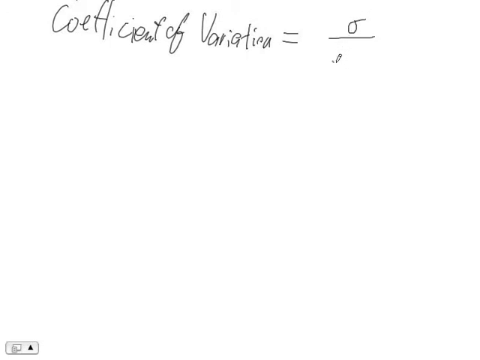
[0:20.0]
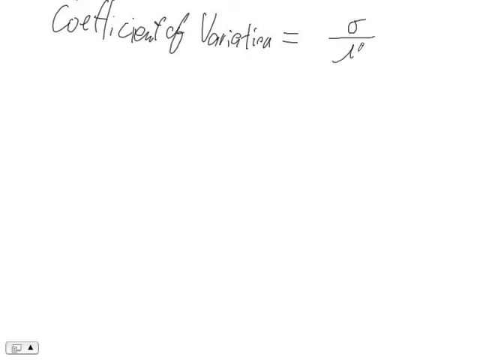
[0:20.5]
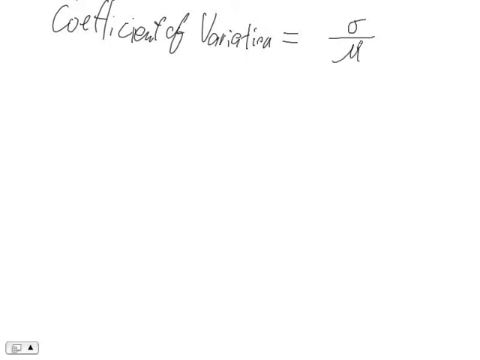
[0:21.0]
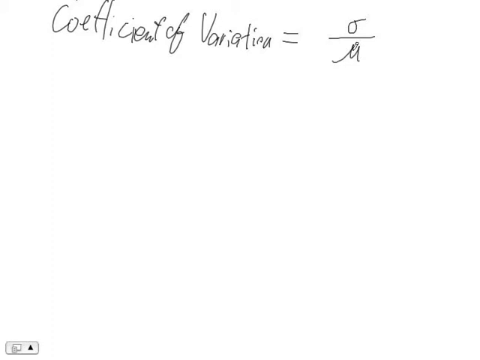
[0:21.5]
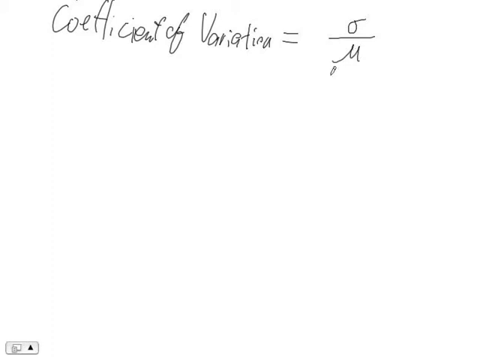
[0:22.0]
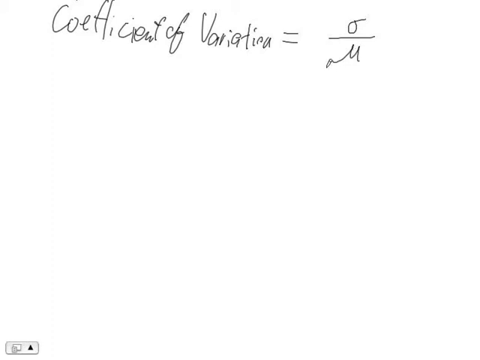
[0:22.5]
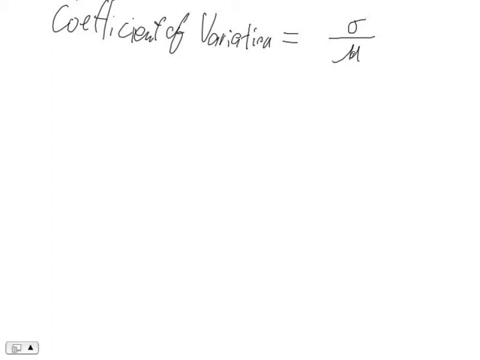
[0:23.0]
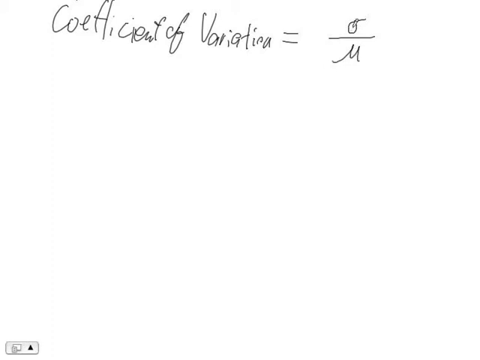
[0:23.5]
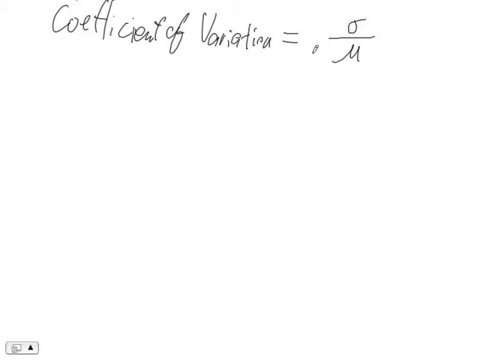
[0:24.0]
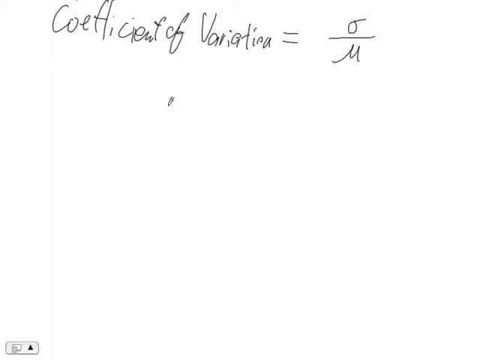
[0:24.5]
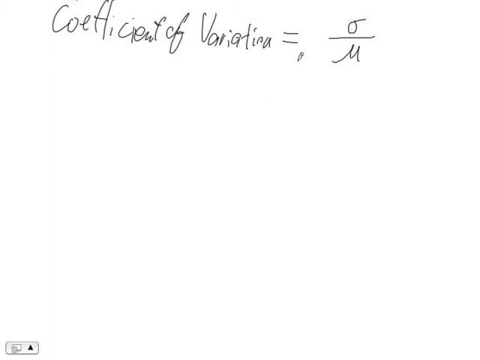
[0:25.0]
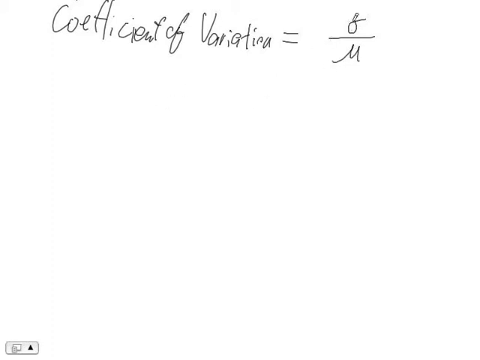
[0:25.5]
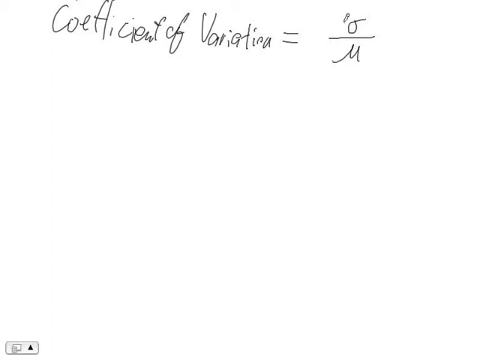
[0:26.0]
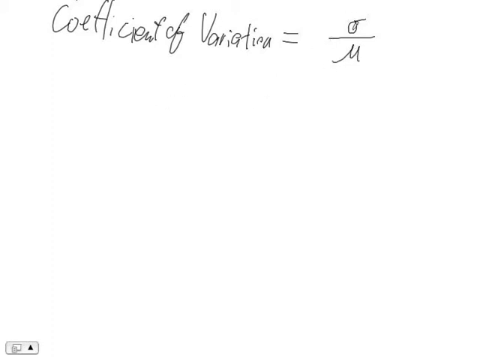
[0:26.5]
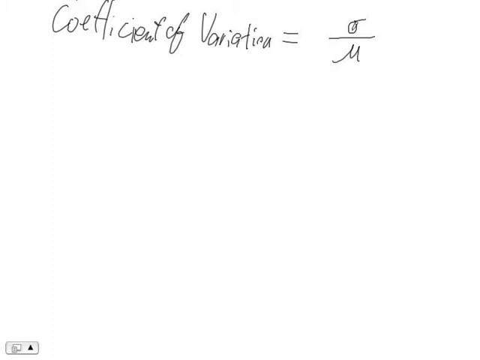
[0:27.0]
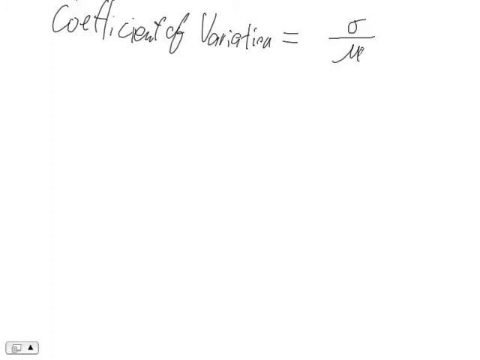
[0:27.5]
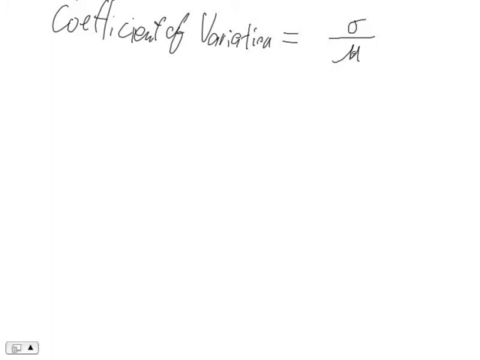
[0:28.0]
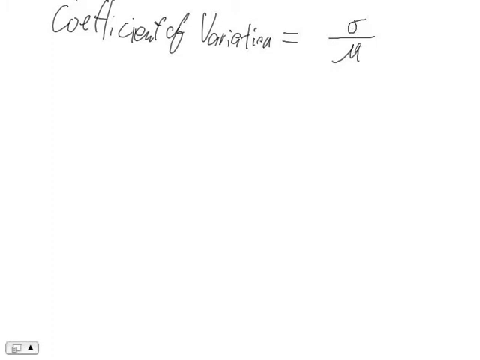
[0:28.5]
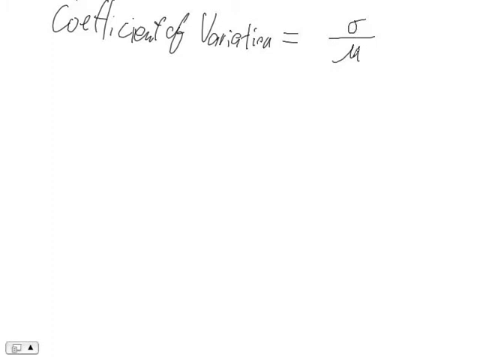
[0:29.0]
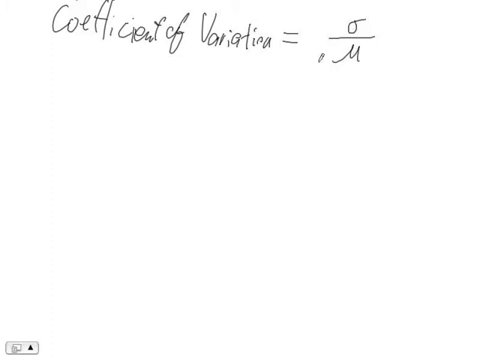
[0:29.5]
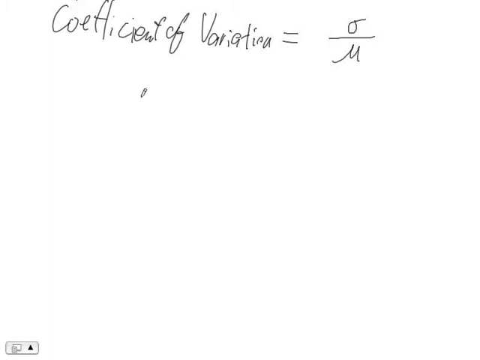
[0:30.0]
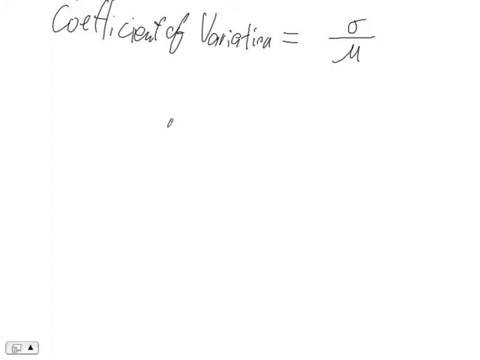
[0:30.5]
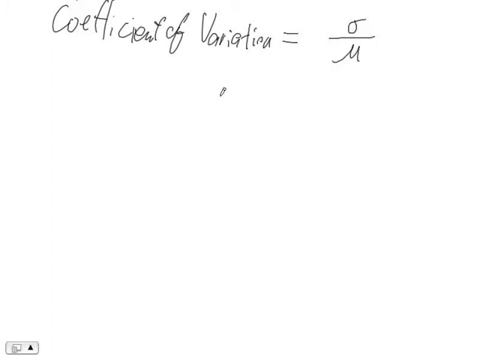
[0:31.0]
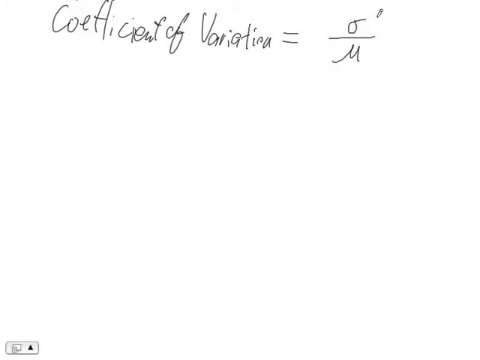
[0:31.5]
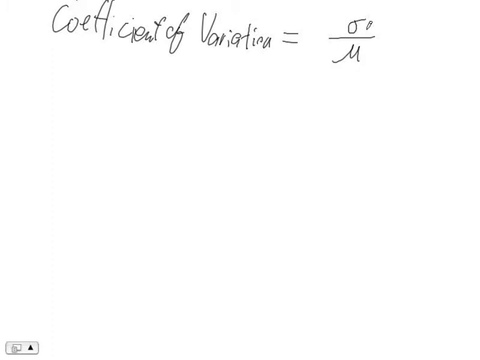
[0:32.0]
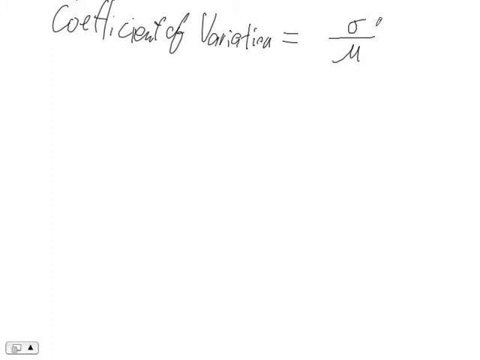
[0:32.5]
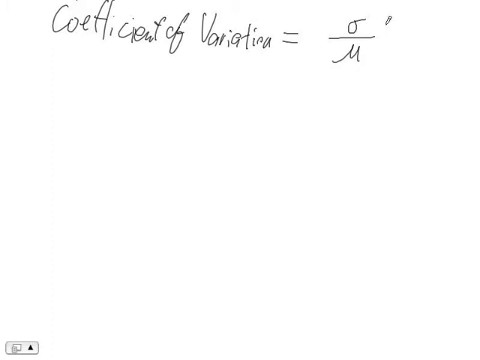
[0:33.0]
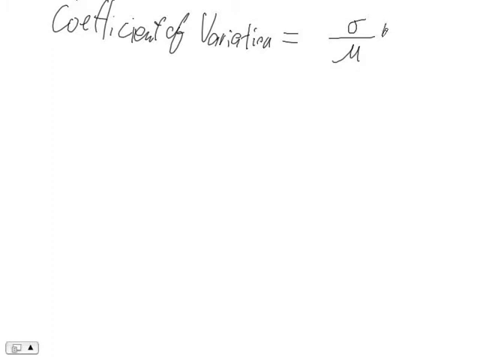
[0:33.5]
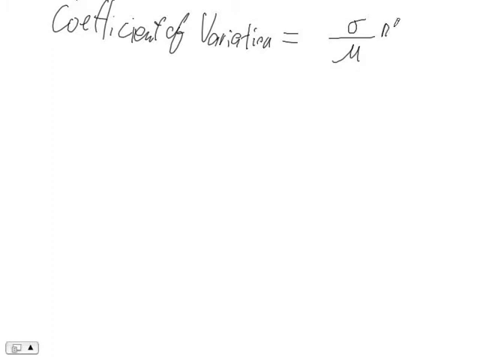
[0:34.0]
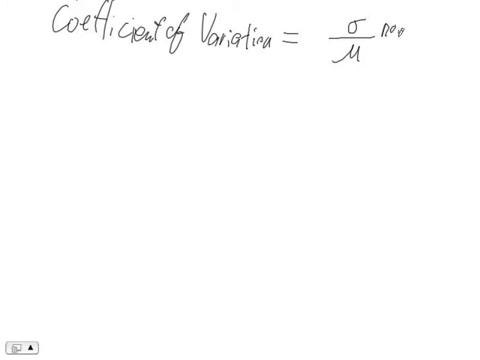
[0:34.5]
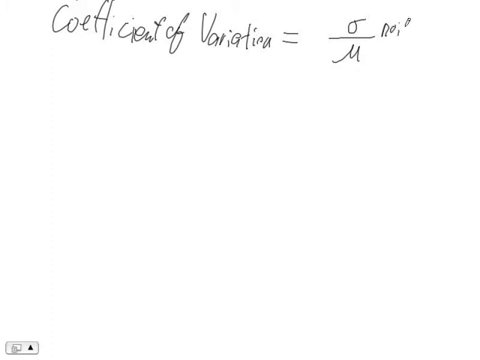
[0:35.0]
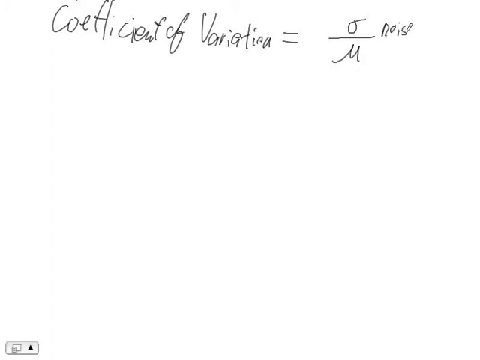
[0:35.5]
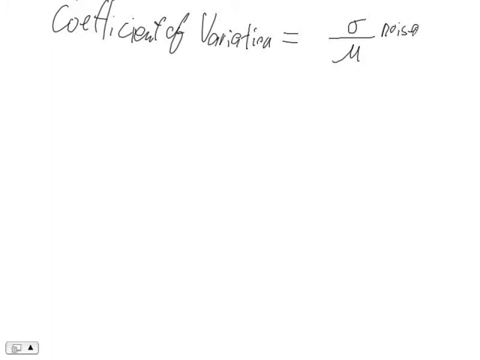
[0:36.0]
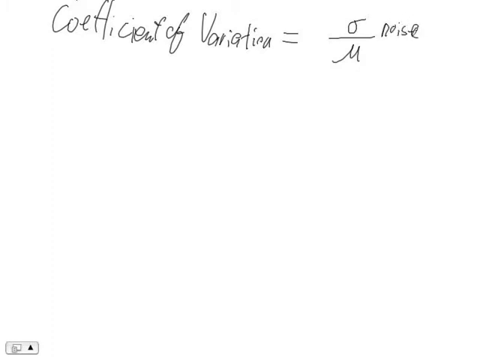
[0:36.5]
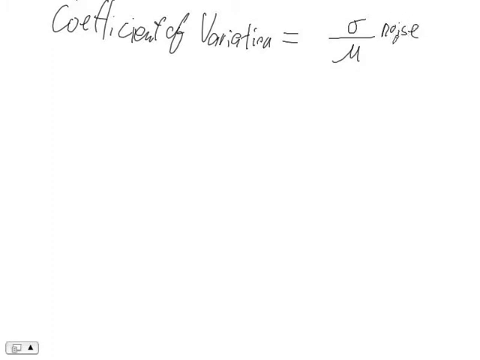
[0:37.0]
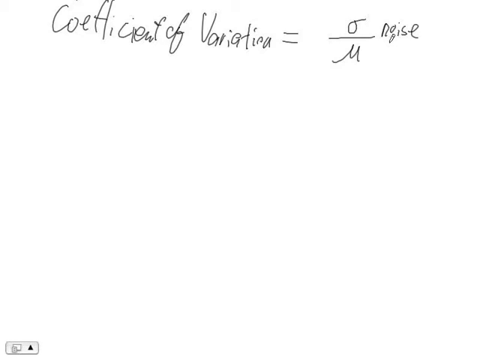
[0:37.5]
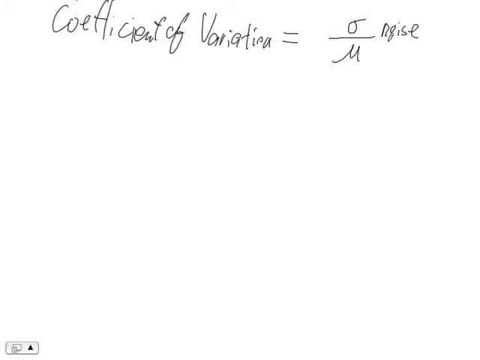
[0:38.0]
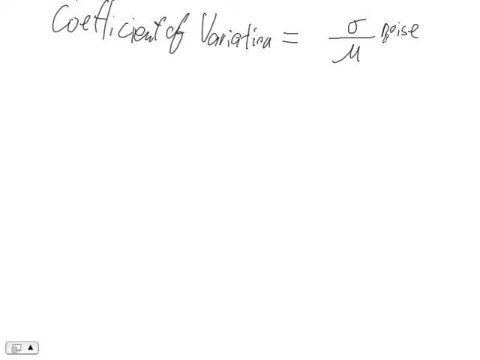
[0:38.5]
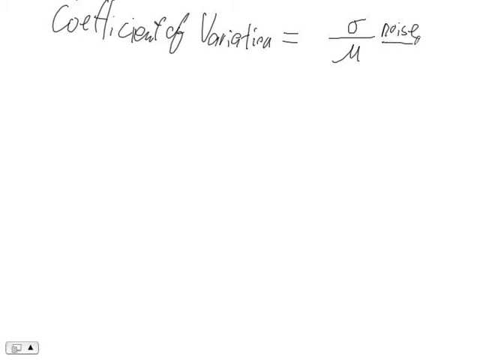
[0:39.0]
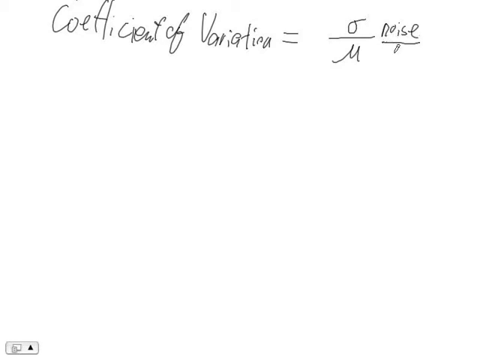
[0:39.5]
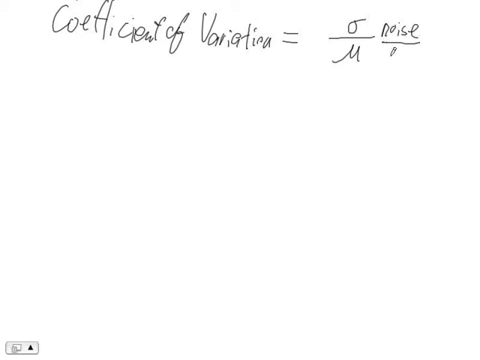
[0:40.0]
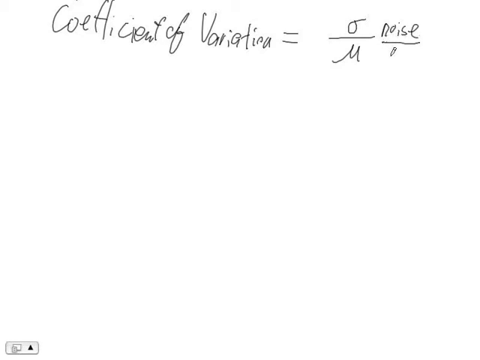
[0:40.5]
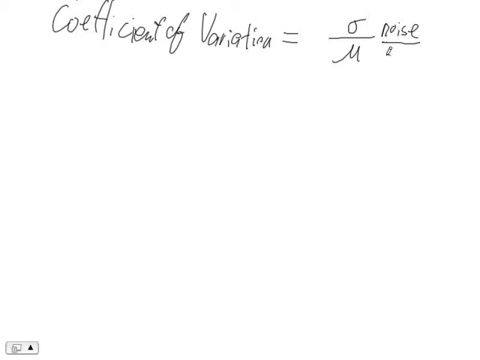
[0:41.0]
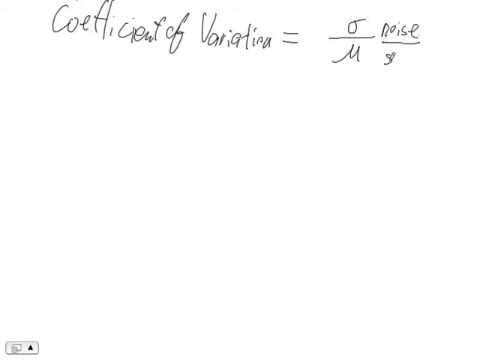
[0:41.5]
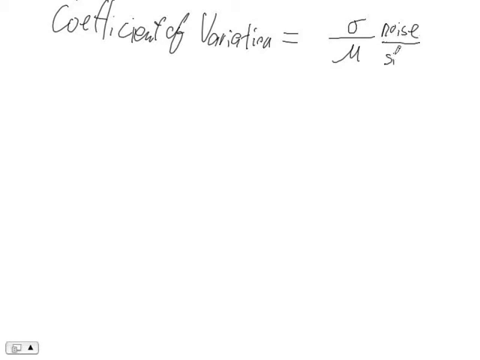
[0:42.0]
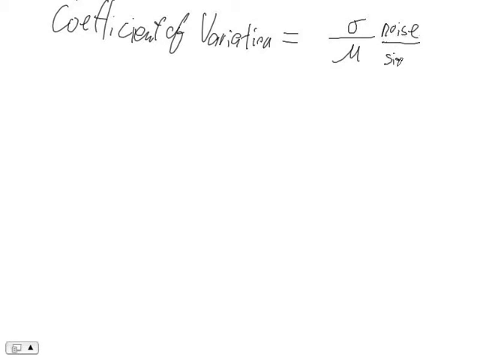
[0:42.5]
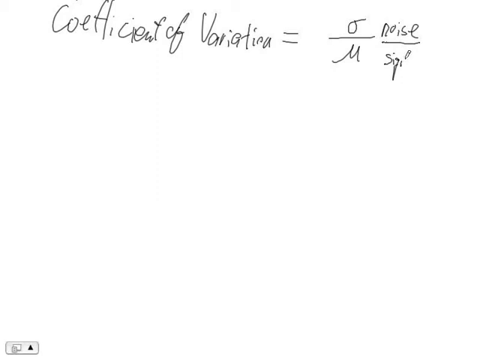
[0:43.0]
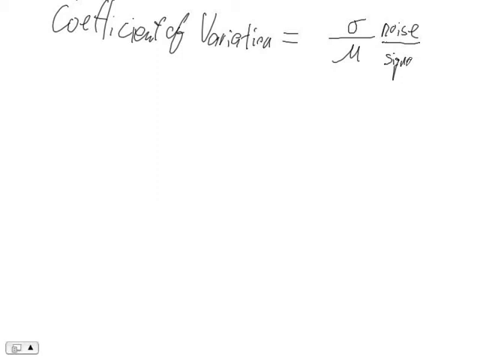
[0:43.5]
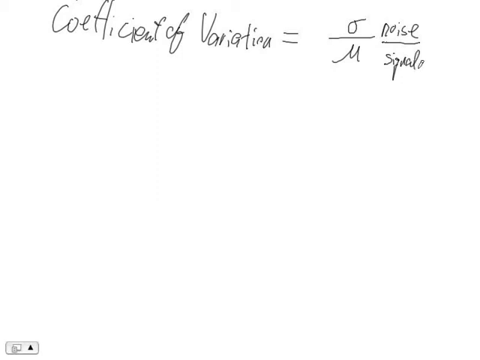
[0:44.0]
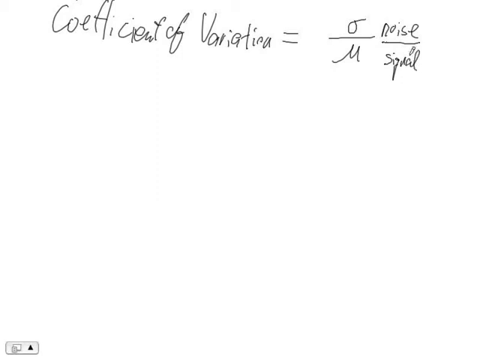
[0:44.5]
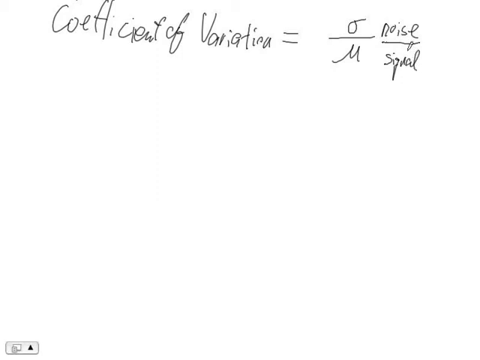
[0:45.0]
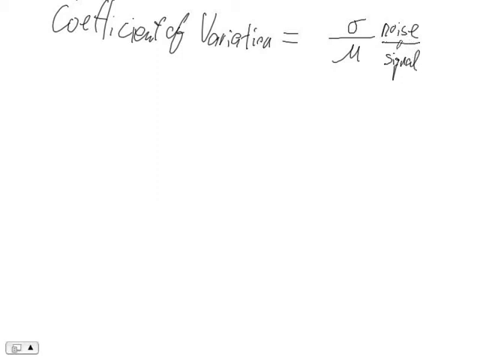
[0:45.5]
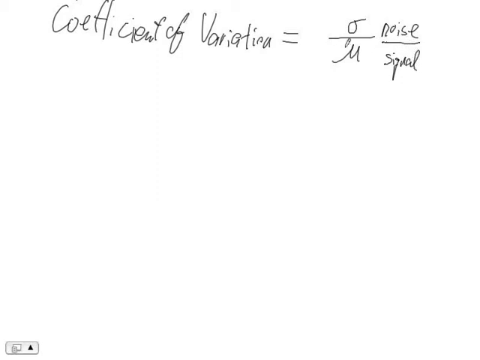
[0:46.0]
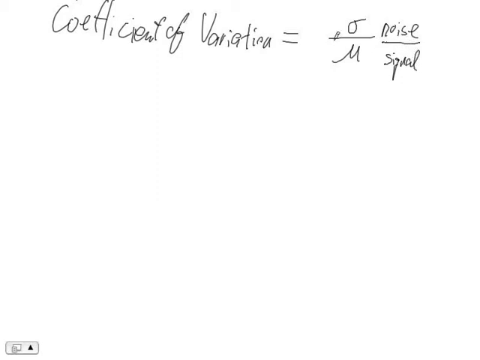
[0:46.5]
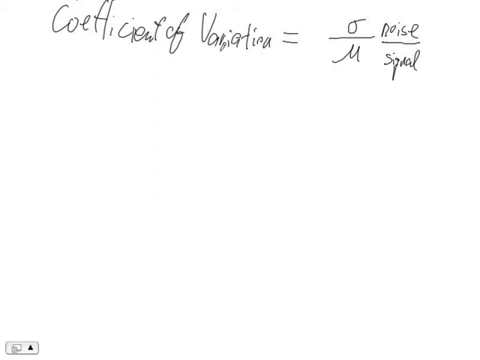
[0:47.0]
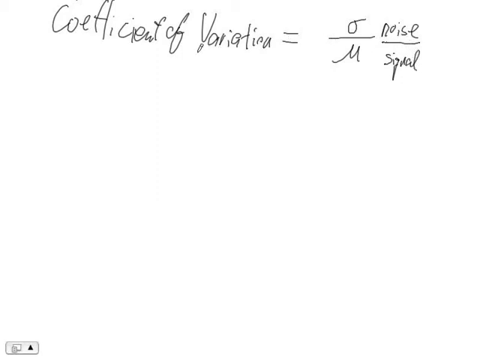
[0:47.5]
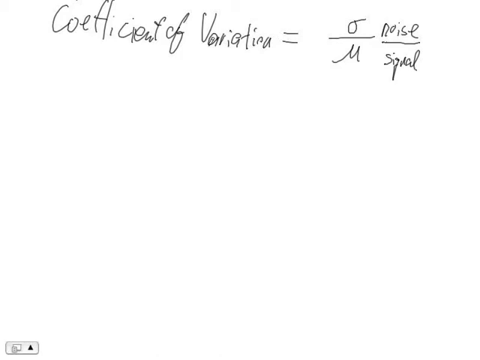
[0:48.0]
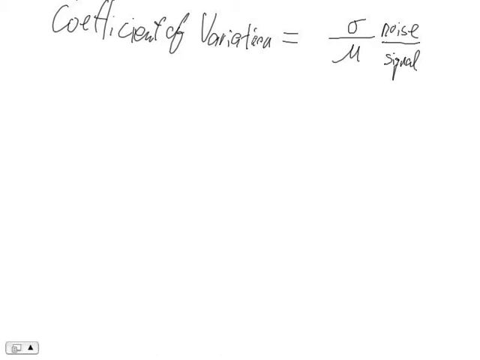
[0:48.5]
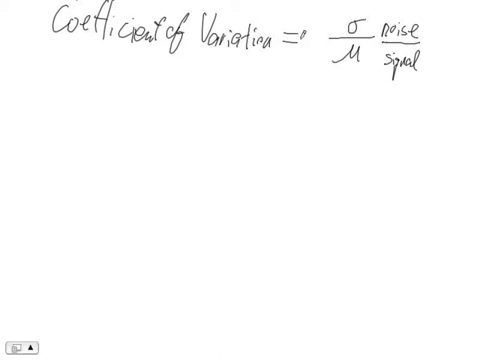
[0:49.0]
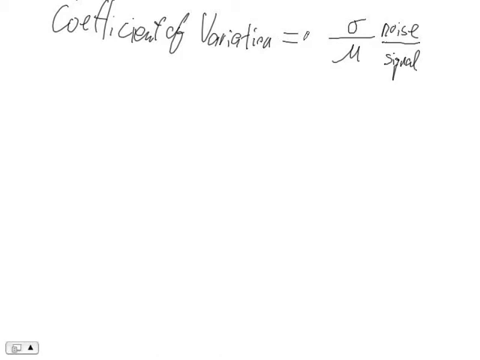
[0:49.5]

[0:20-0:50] The coefficient of variation is shown with a different formula using unfamiliar signs. One sign is shown as equal to the noise divided by the signal. The person writes the signs down on a white blank page on a computer or laptop.